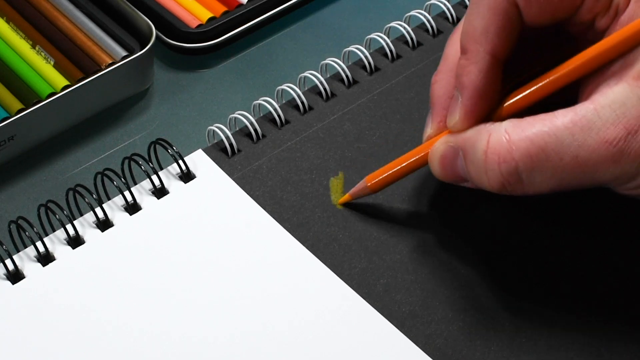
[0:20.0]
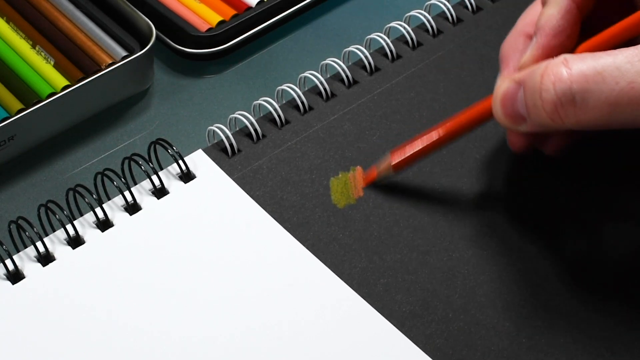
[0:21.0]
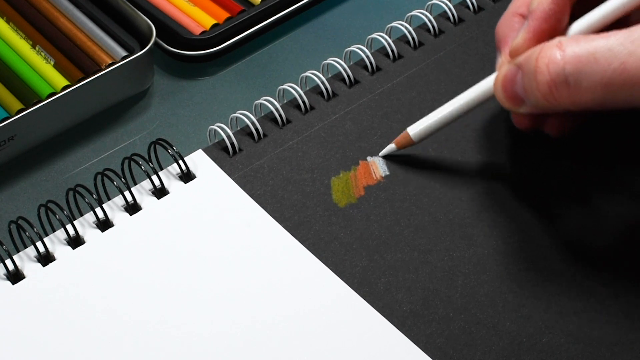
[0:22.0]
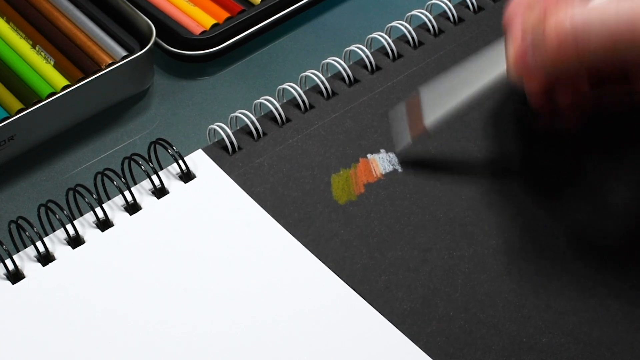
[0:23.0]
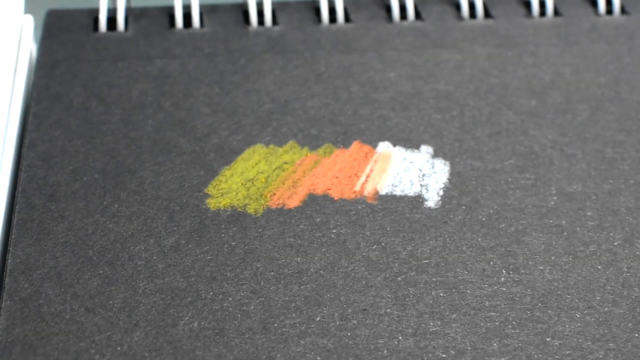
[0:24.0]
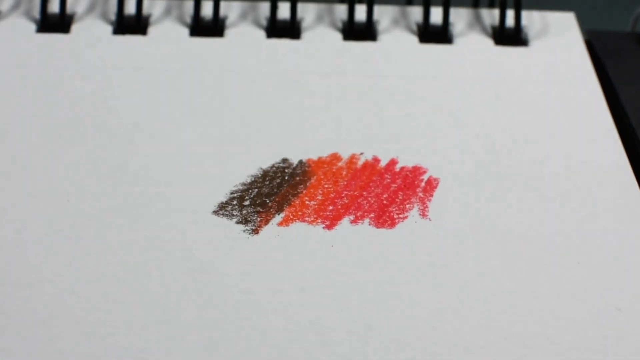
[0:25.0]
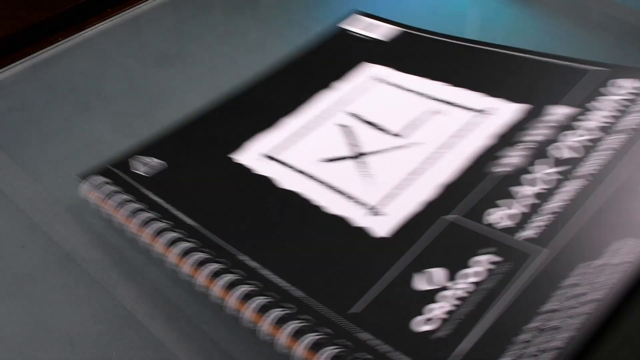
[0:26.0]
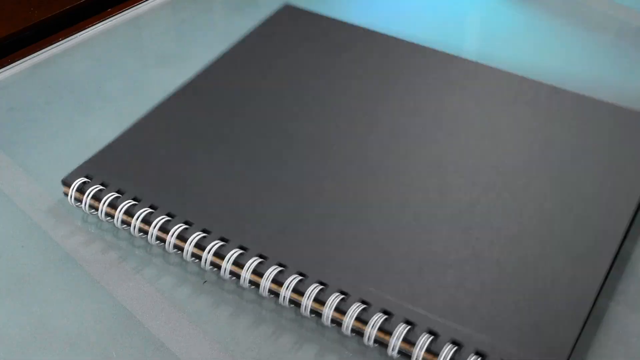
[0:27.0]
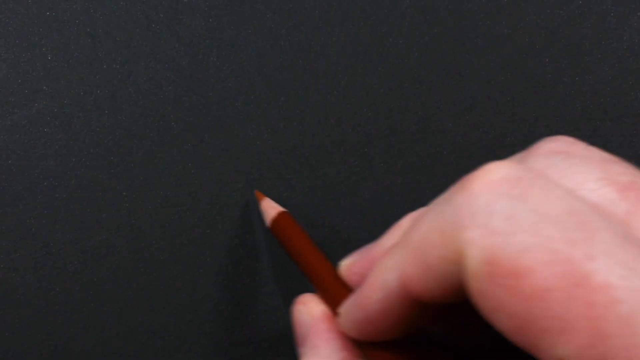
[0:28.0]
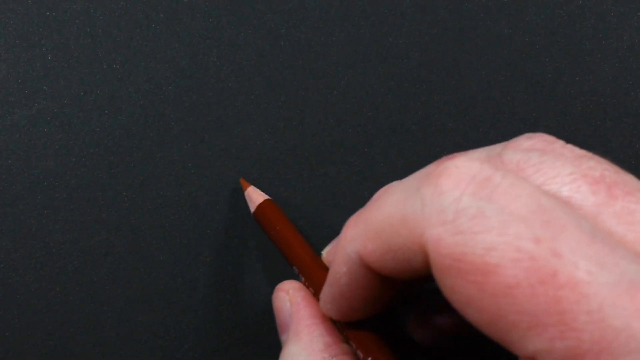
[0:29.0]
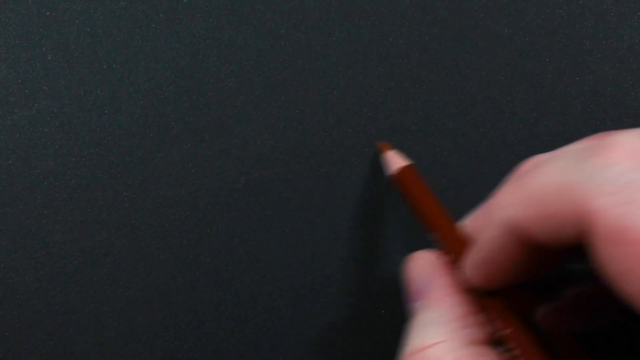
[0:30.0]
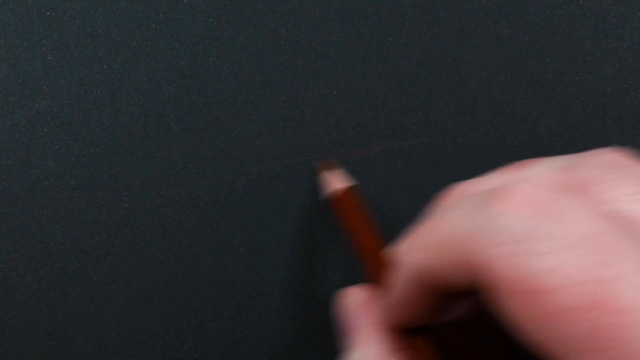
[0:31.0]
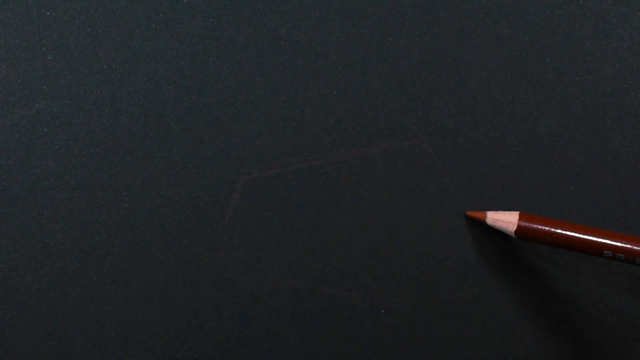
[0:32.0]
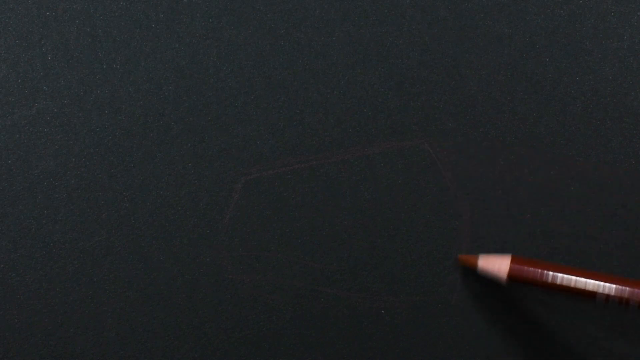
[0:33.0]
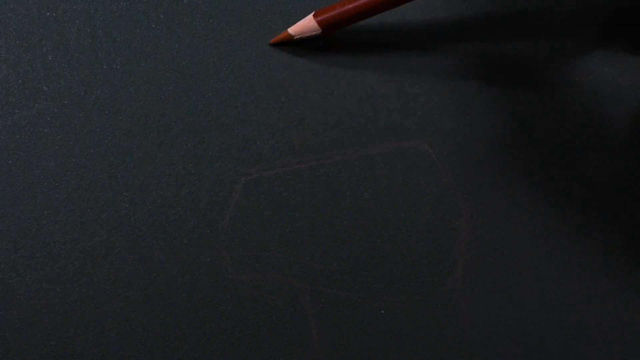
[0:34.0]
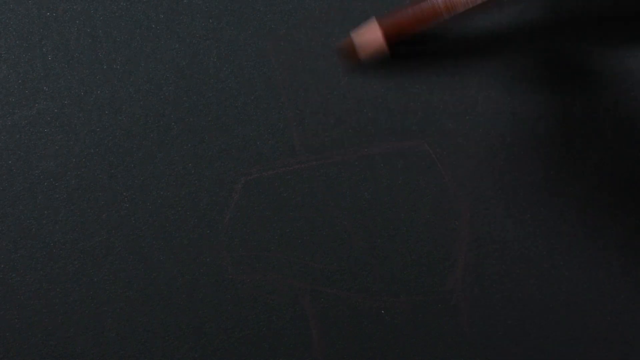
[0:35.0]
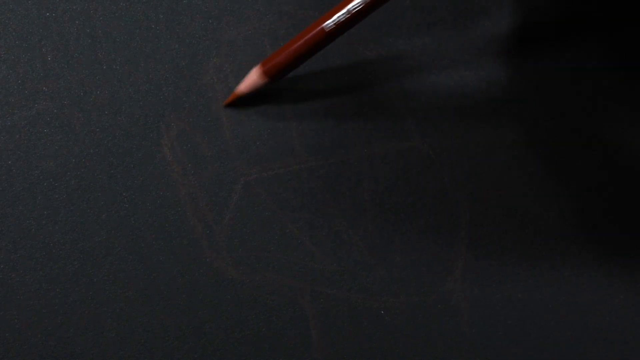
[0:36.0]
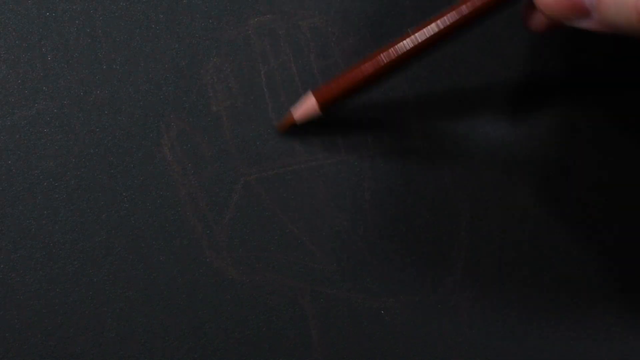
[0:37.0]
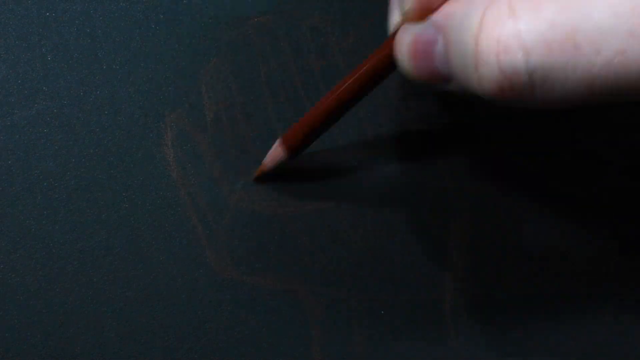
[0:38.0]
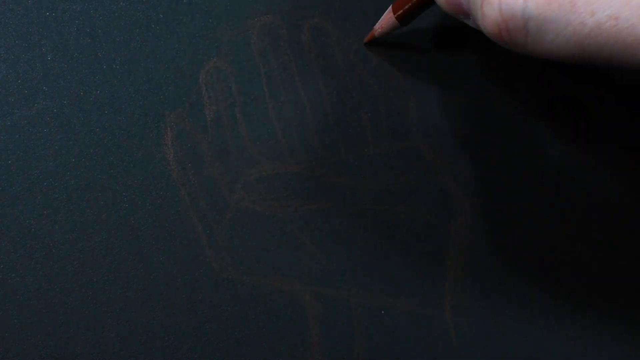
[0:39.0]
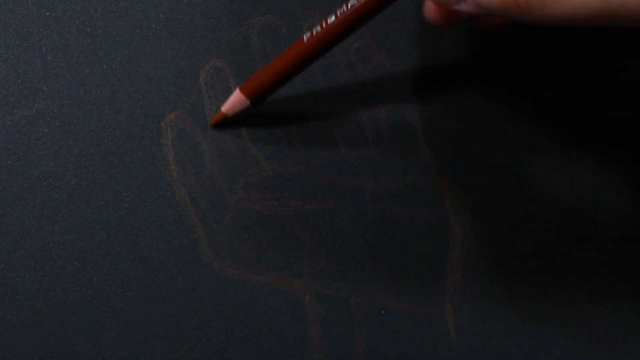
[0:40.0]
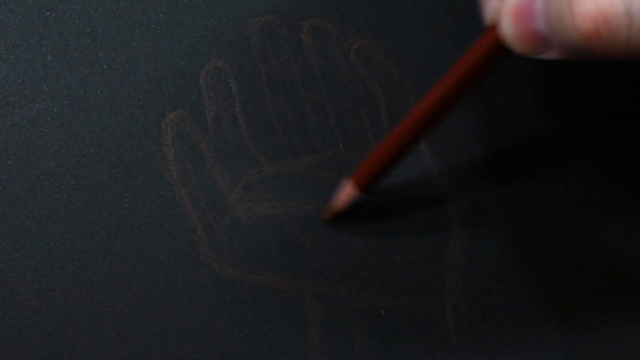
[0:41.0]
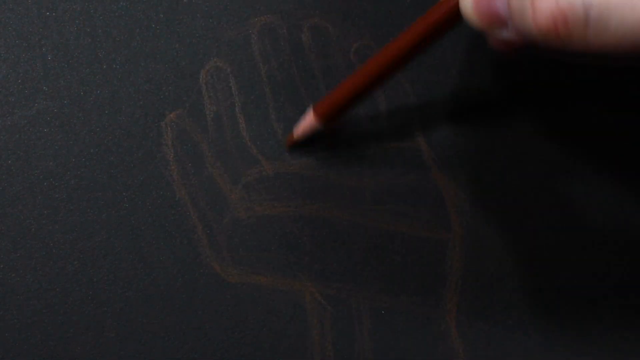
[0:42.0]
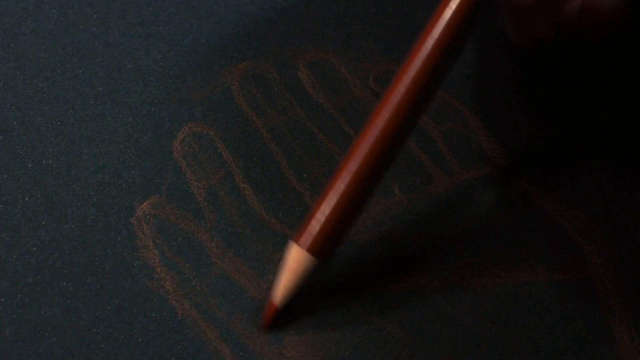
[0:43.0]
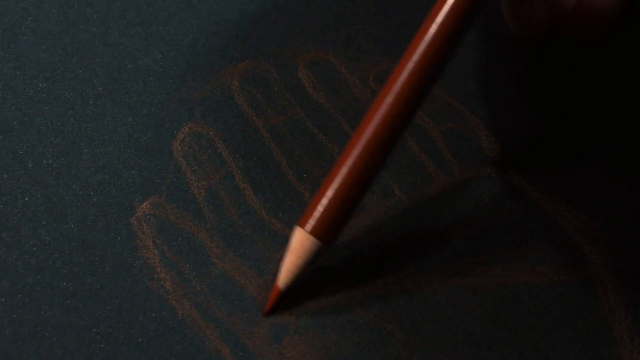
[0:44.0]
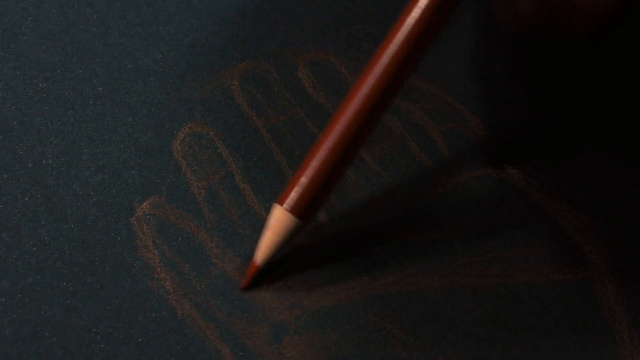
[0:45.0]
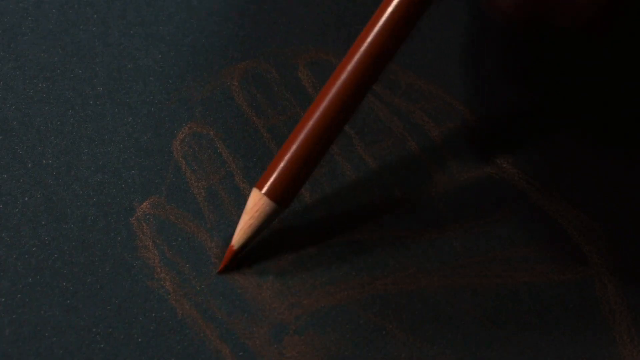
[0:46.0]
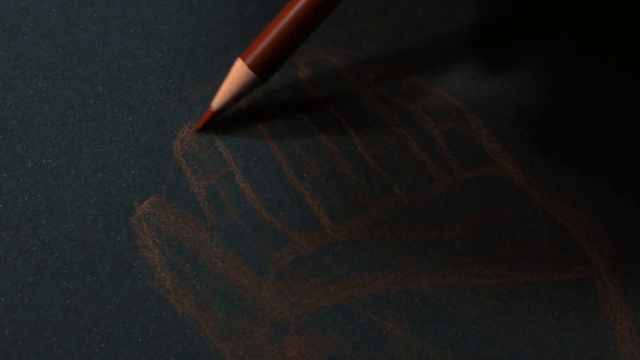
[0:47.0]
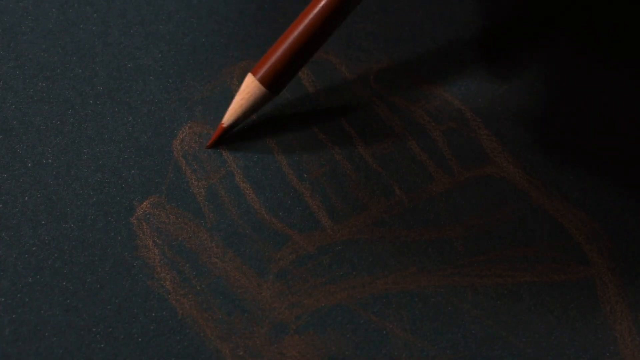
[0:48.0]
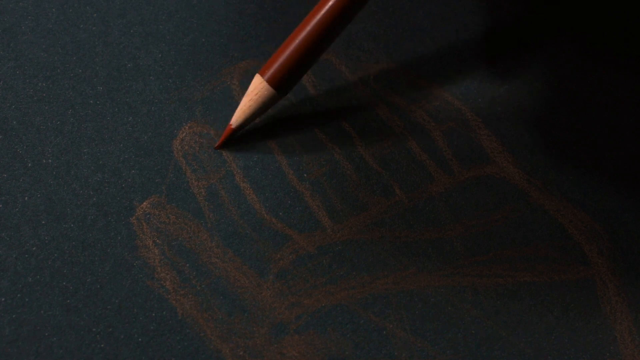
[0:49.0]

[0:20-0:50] A person holds a matchbox with a matchstick in his right hand. He lights the matchstick and lights three candles, then places the three candles around a black notebook that has white spirals on the end of it. The man picks up a feather pen and begins writing on the black book cover; the writing turns white, but it is difficult to tell what he is writing. As he writes, the video fast-forwards, and he signs the note at the end. He then picks up three different coloured pencils, which look to be green, orange and white, and swatches them on the black part of the book. On the white page there is a swatch of a black crayon and a red crayon next to each other. He then picks up a red pencil and begins to draw a picture, but the paper is too dark to see what the drawing is.